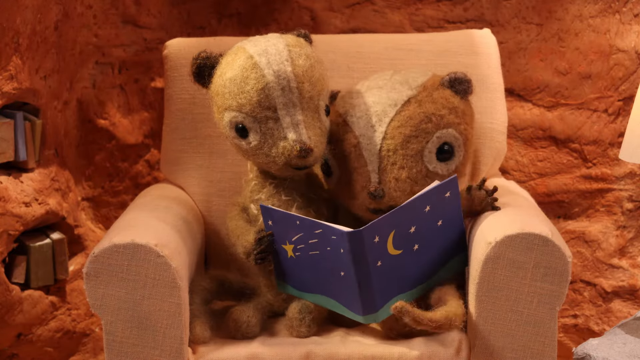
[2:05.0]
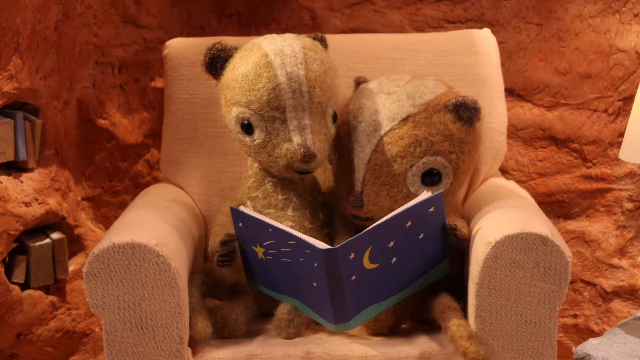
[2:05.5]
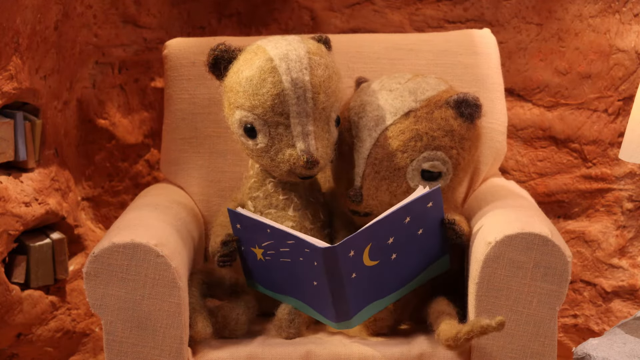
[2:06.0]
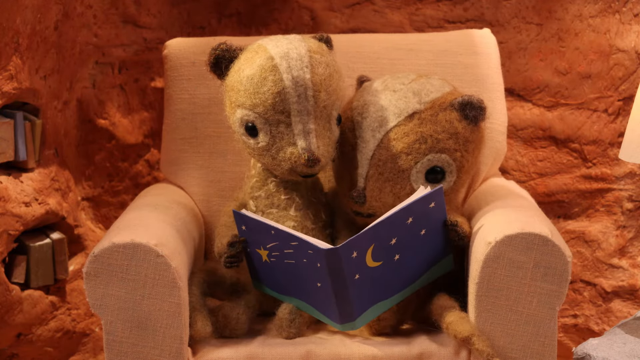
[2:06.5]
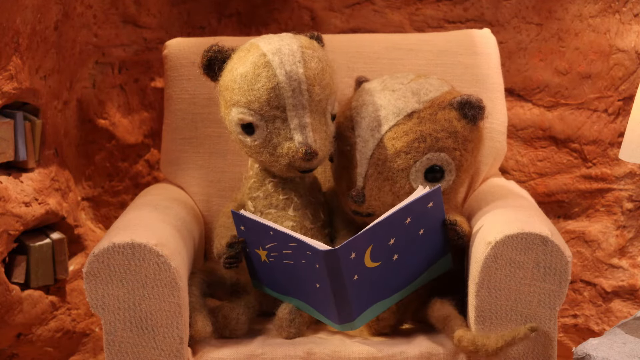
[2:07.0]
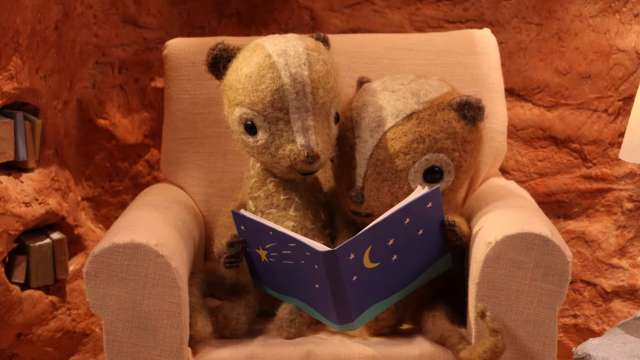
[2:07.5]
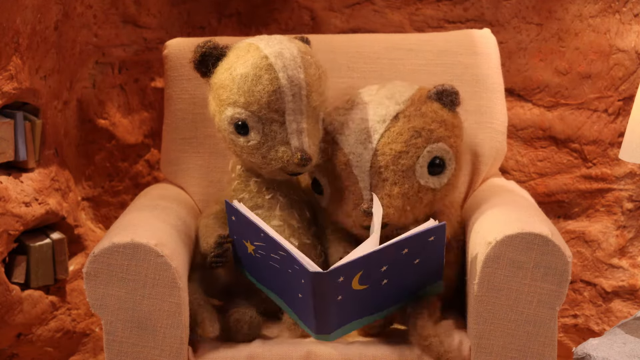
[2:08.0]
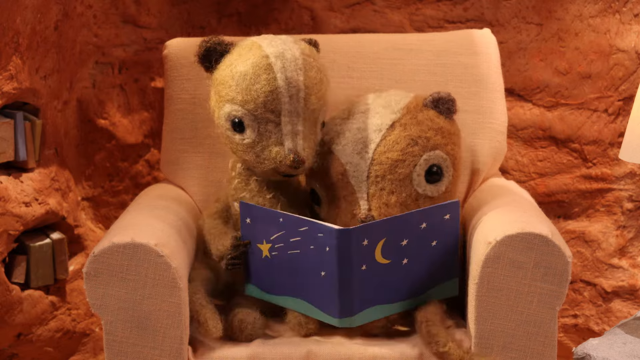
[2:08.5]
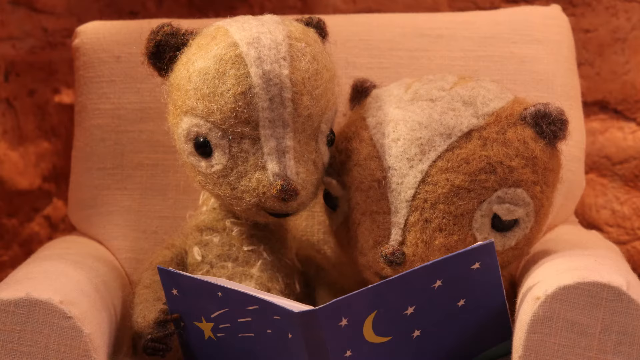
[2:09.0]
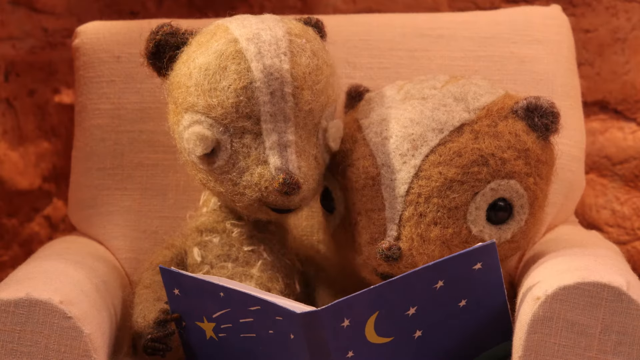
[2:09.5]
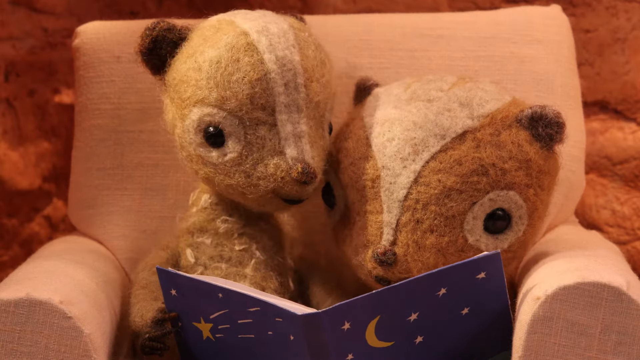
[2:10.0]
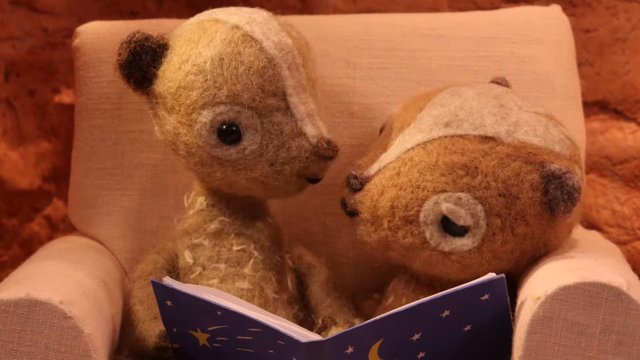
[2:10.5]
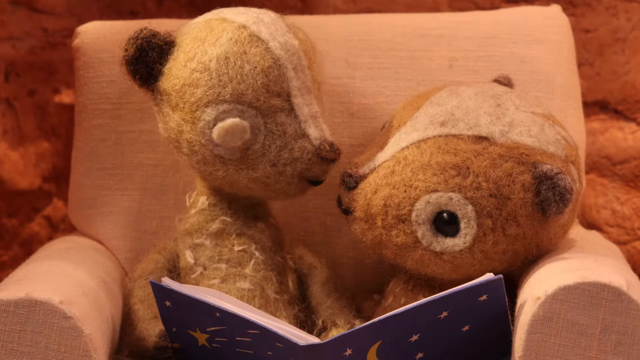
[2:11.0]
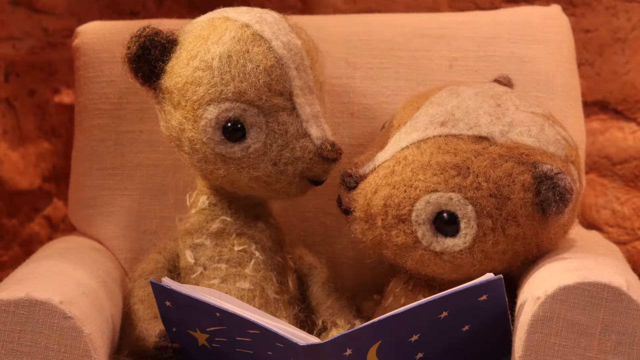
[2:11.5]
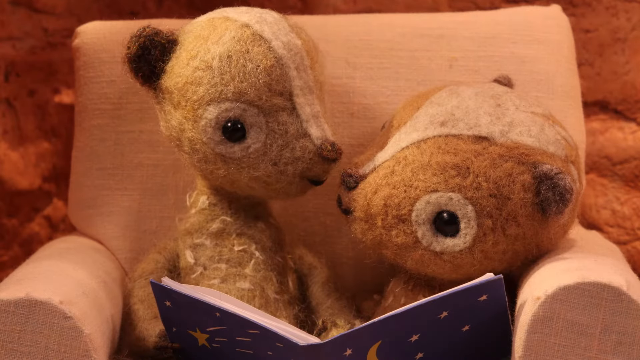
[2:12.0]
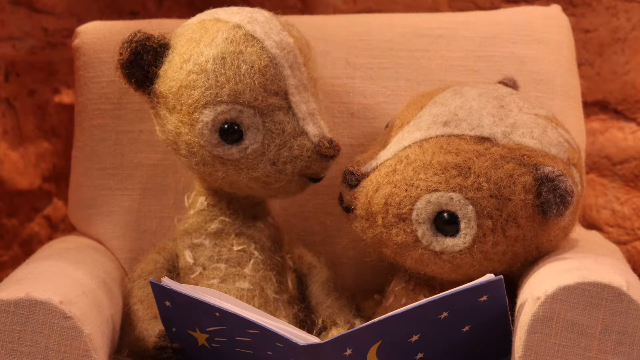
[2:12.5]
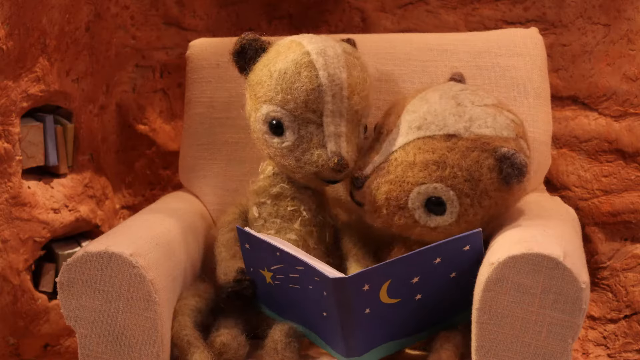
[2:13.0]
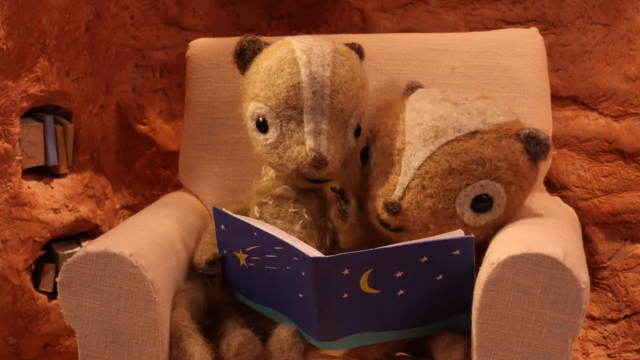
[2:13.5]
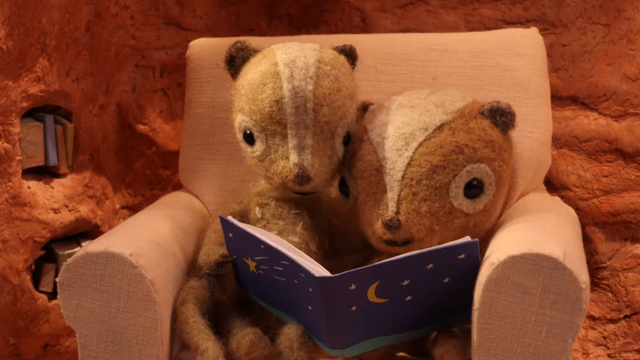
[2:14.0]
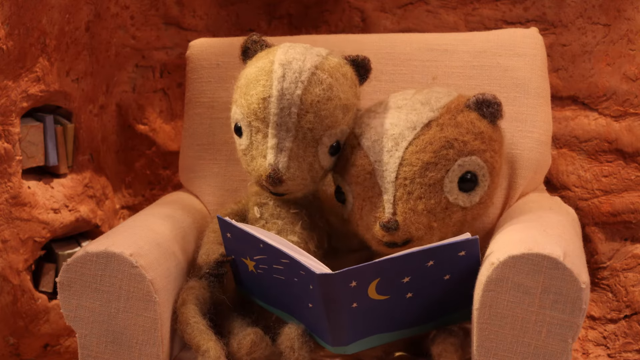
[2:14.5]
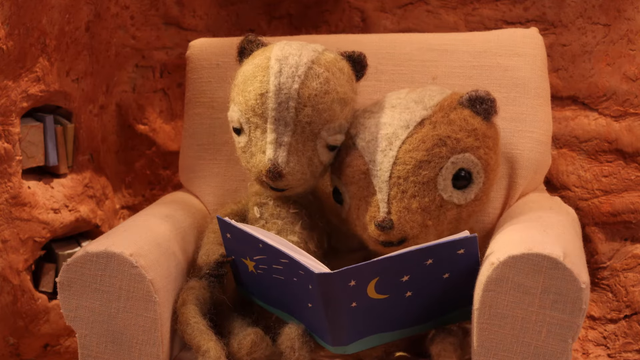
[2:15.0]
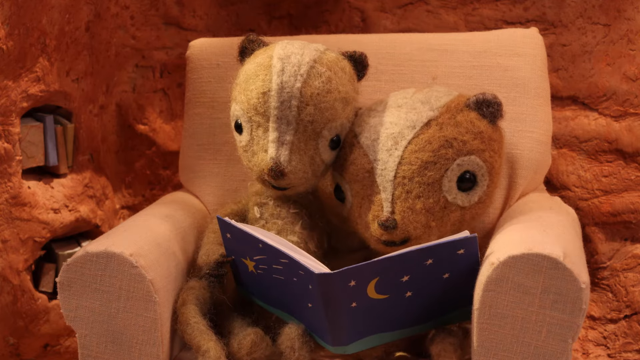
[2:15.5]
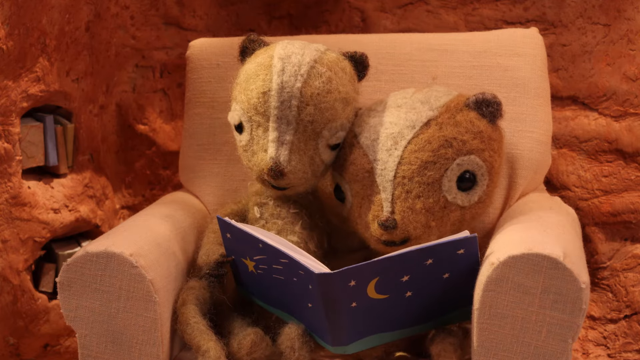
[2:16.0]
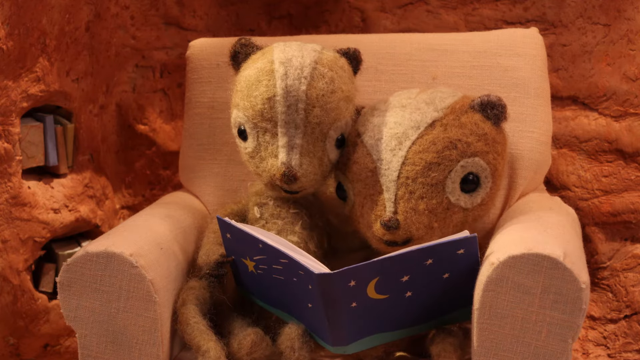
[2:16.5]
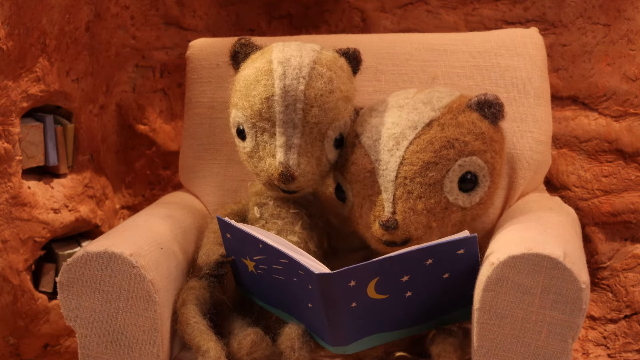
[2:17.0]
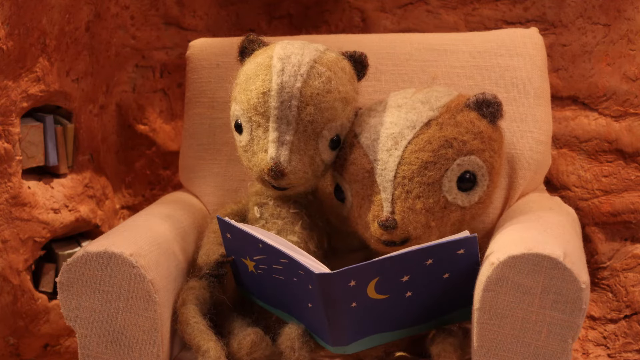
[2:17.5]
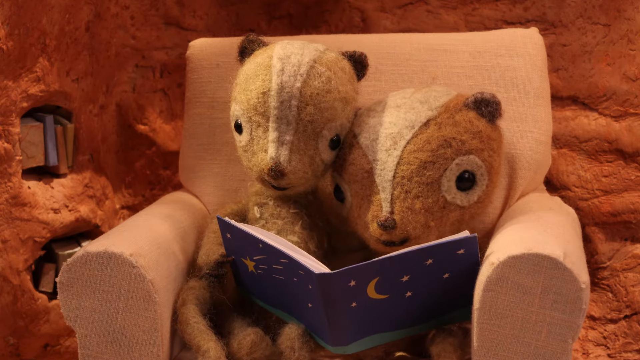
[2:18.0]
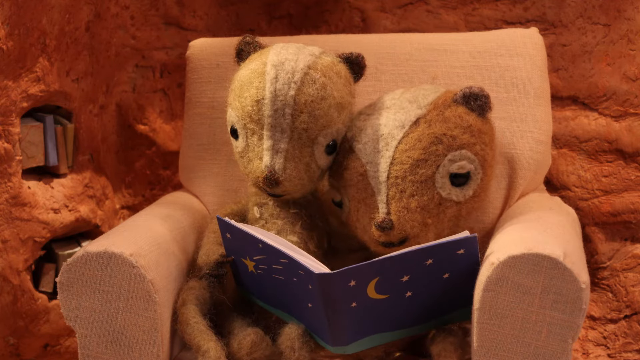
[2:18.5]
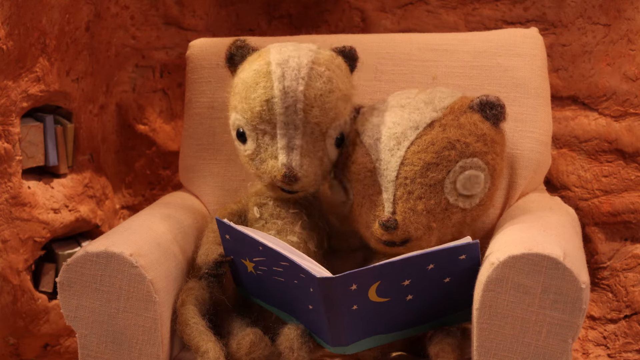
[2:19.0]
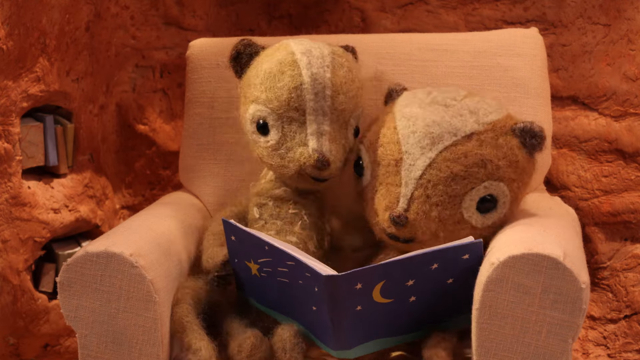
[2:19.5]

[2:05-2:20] Two animated squirrels in a rock-like lair sit right beside one another on a cushion chair, reading a book with stars and a moon on its cover. They turn the pages, look at one another, blink often and playfully touch each other as they read. To the left of the chair are shelves within the rock-like structure that appear to hold more books. To the right of the chair is a light, with only a very slight portion of its lampshade visible.